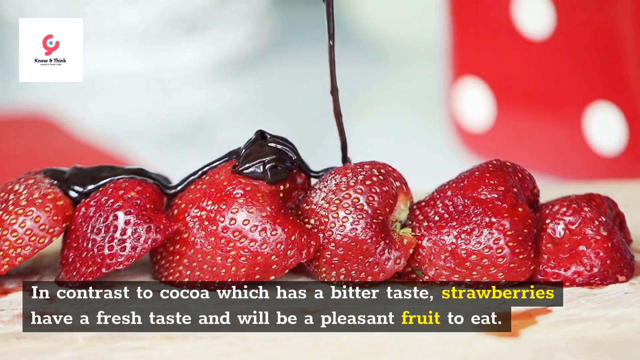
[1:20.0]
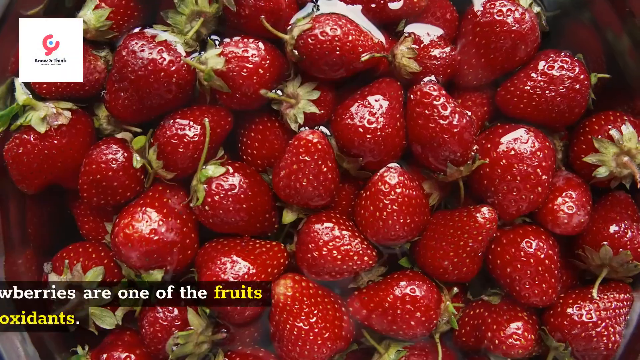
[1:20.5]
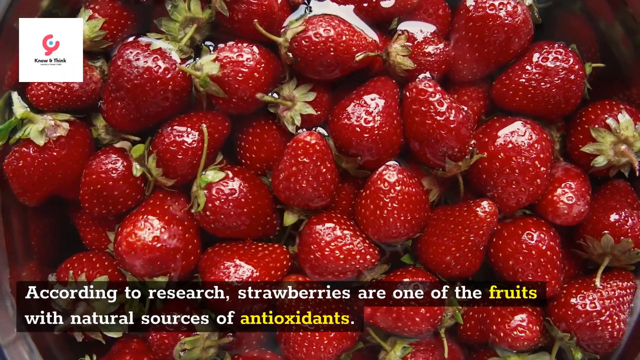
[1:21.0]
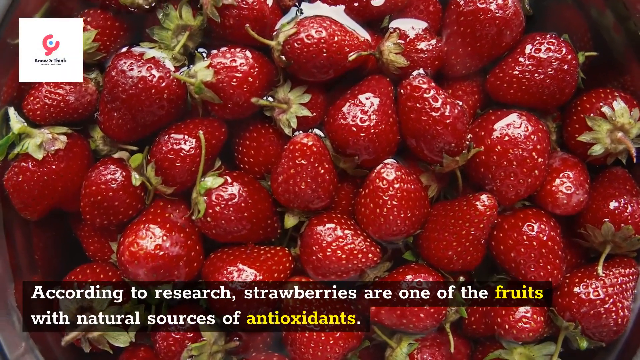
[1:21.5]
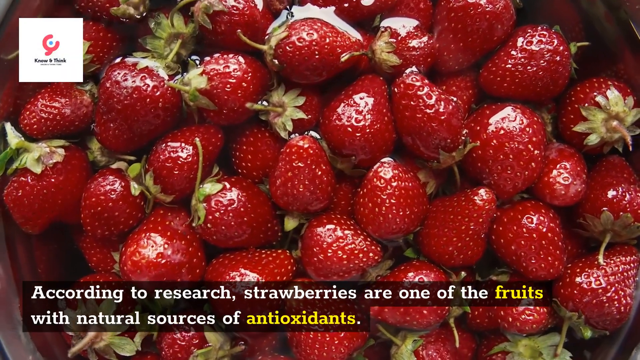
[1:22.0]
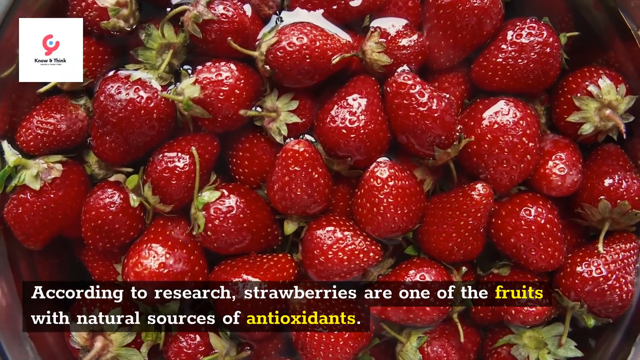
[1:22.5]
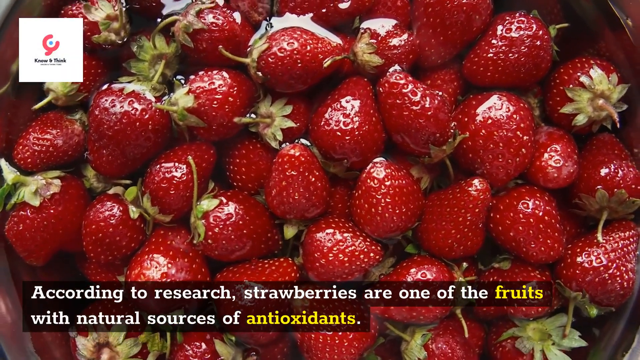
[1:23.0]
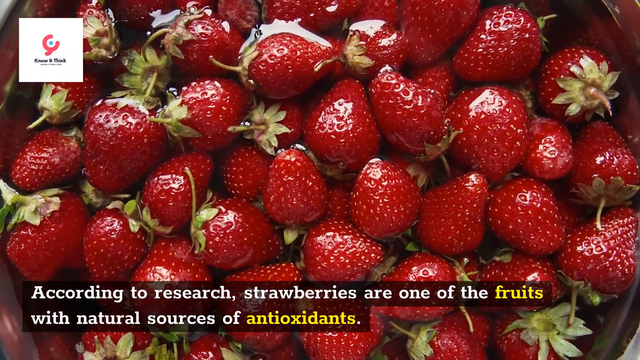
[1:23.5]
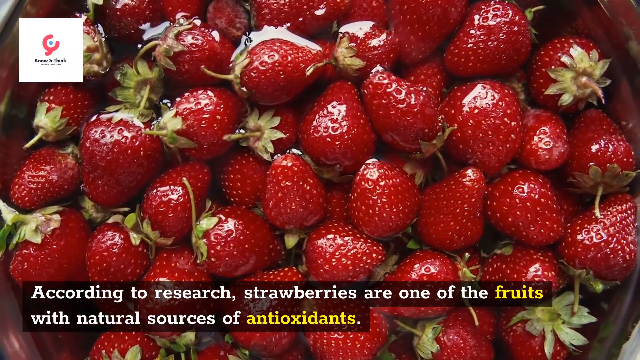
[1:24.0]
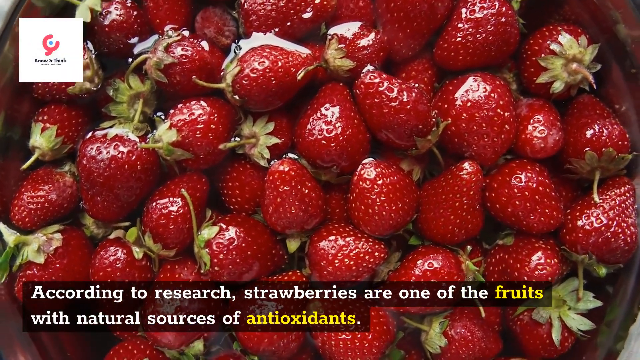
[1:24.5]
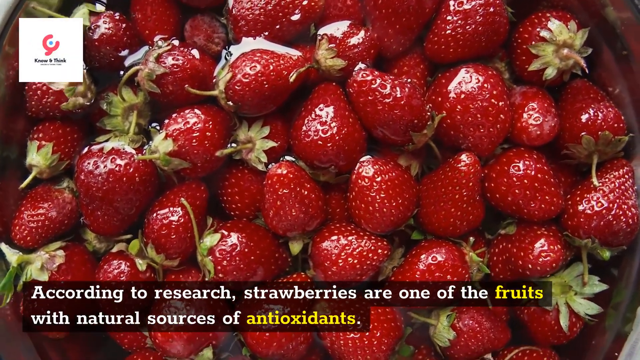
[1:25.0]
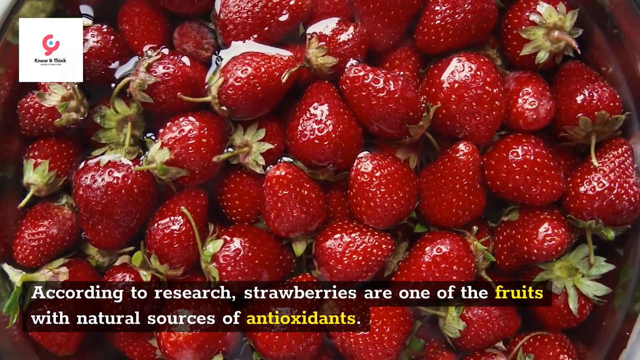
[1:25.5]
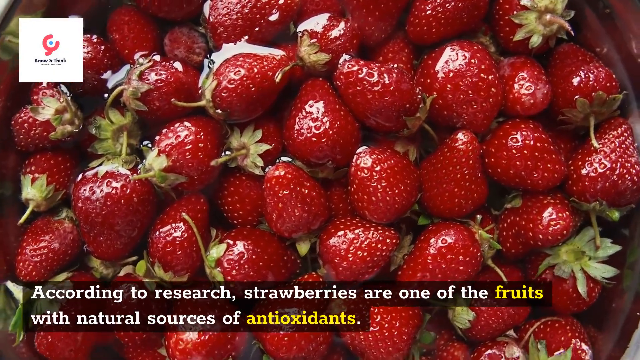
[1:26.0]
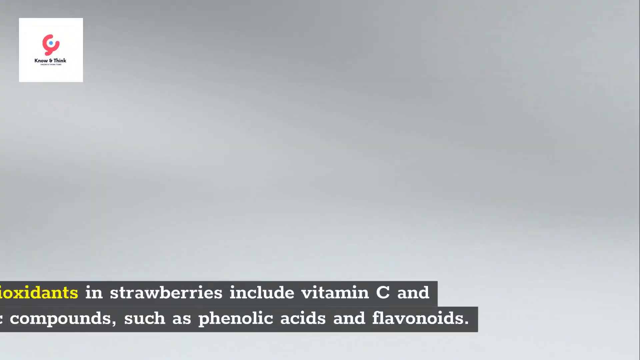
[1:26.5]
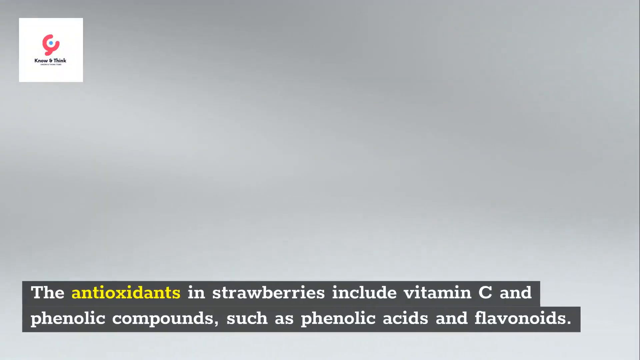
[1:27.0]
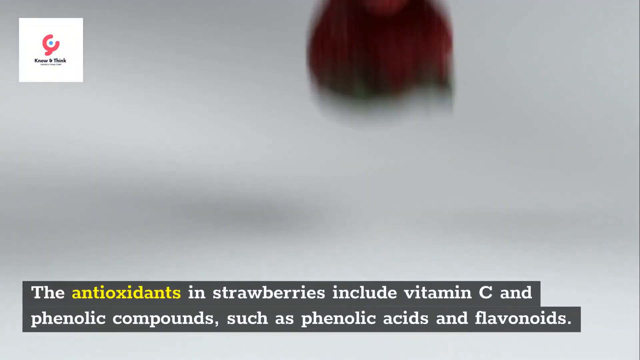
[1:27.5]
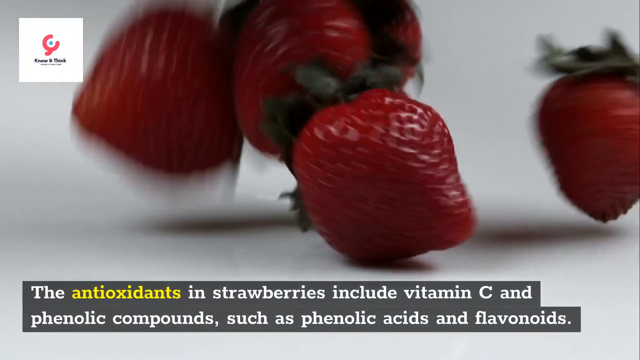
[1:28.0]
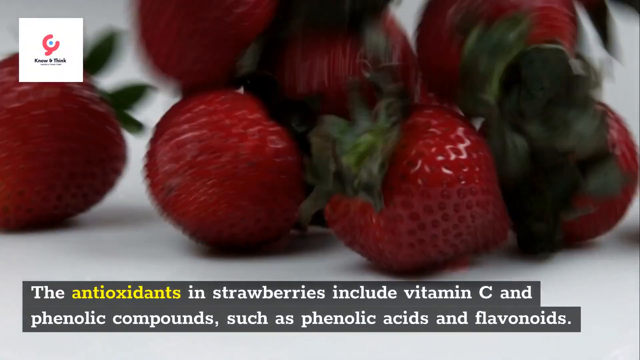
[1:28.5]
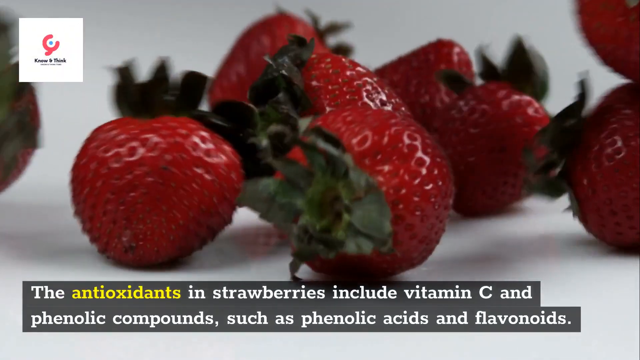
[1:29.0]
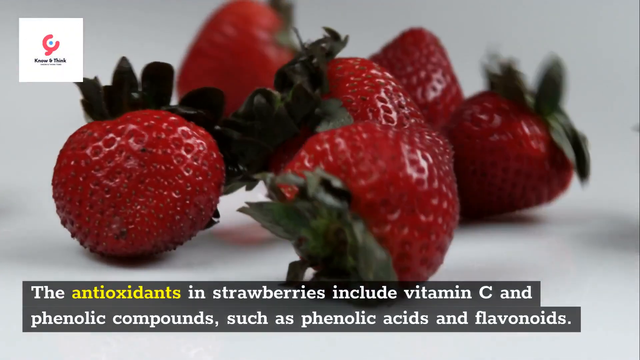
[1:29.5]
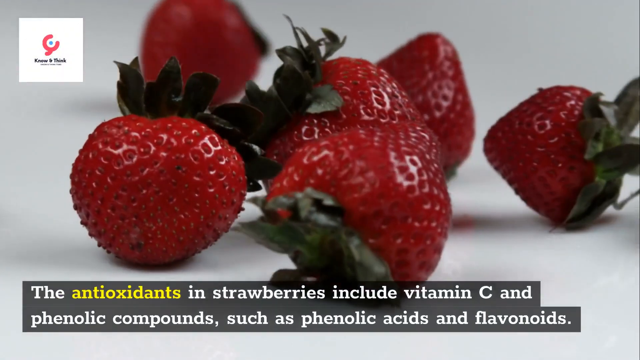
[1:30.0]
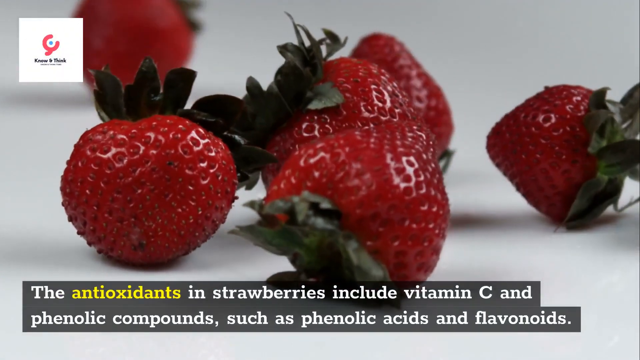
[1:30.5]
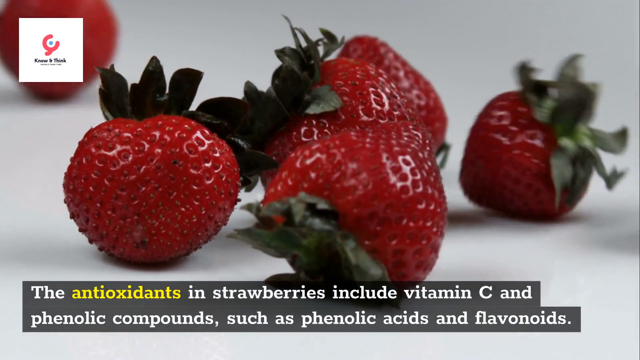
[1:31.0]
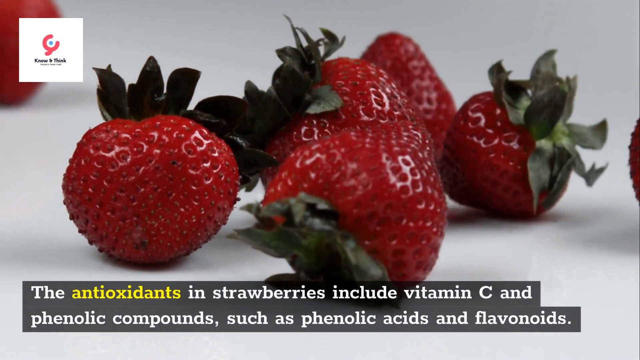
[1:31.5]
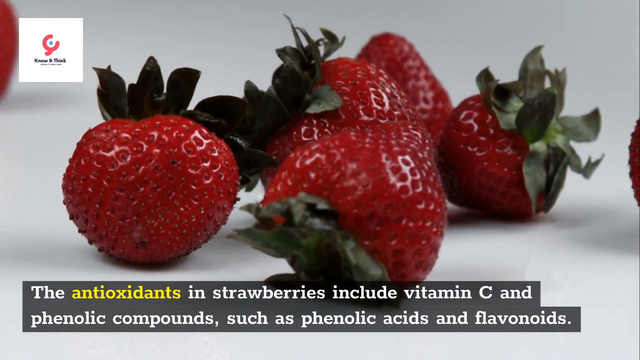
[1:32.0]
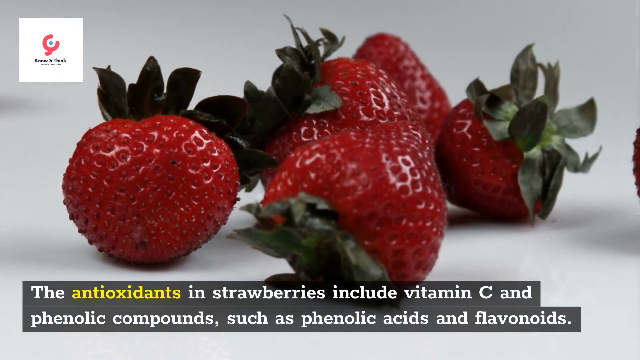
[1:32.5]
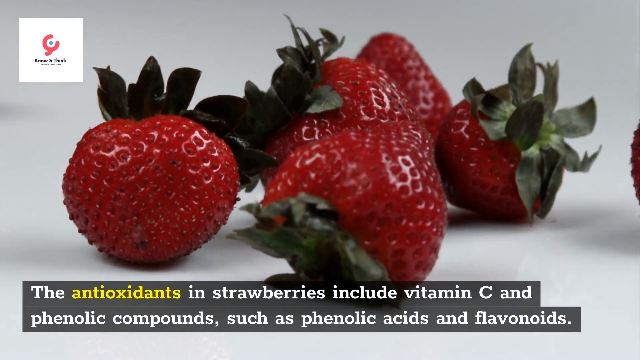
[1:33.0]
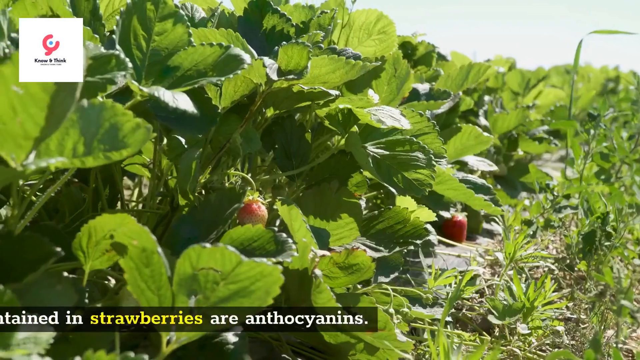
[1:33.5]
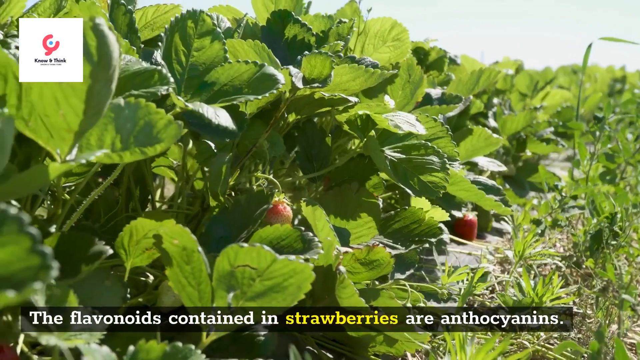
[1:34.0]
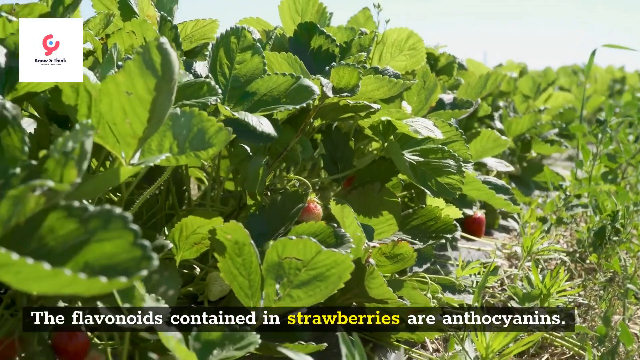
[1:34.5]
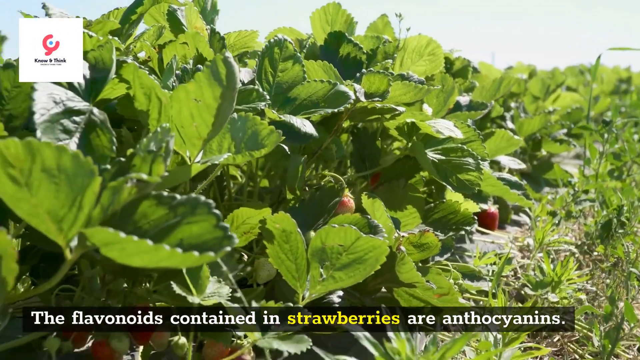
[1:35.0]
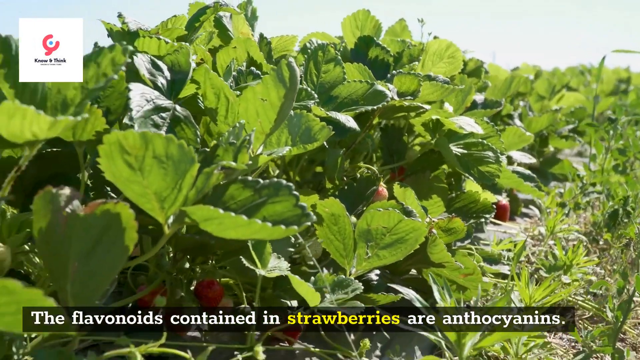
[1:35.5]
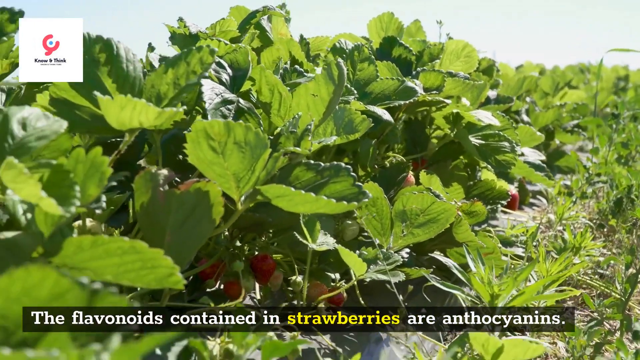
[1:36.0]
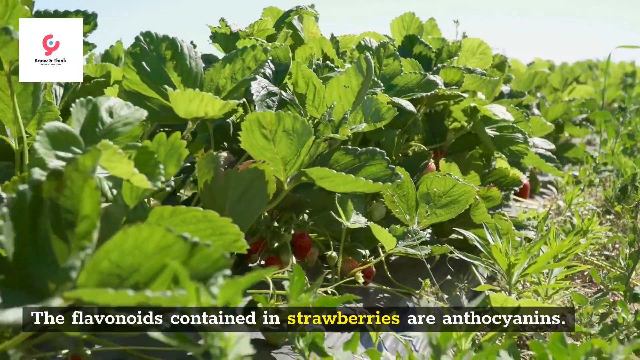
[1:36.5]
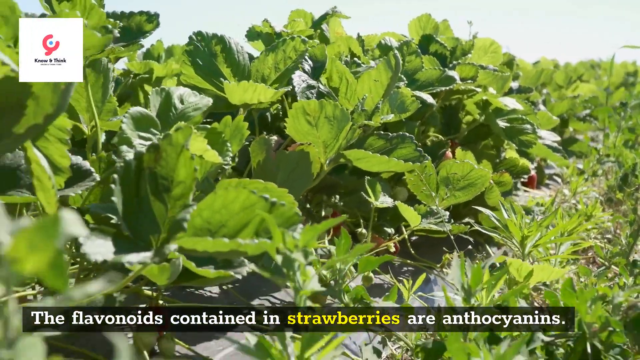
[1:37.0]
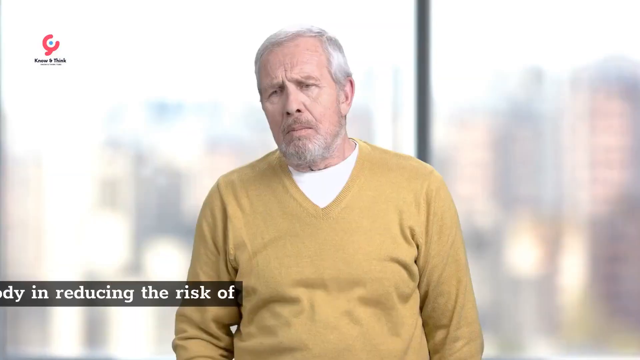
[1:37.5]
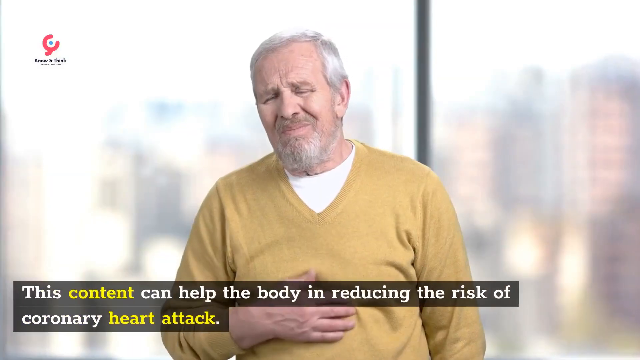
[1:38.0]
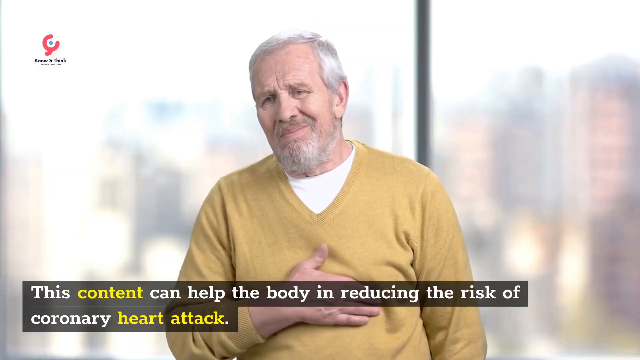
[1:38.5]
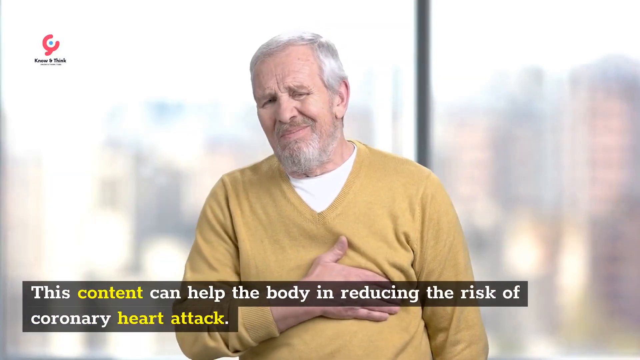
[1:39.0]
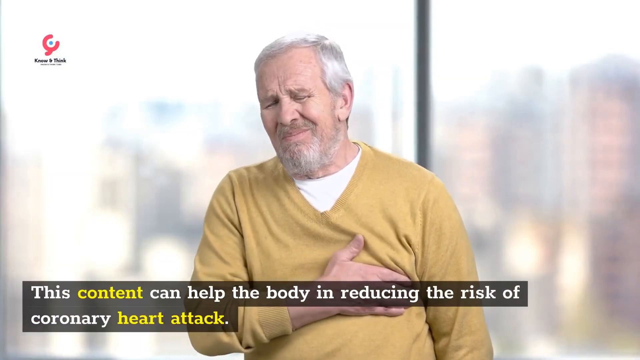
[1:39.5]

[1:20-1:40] A close-up shows a group of strawberries, with a text graphic at the bottom stating that strawberries are one of the fruits with natural sources of antioxidants. After a transition, another bundle of strawberries falls on top of a white apple, and an infographic states that strawberries include vitamin C and phenolic compounds such as phenolic acids and flavonoids. The scene then shows strawberries growing in a field; most of the frame is taken up by green foliage and leaves, with some strawberries visible. Next, an older white man with gray hair, sitting or standing in a room, rubs the area of his heart with a grimace on his face, while the infographic states that this content from strawberries can help the body in reducing the risk of coronary heart attack.